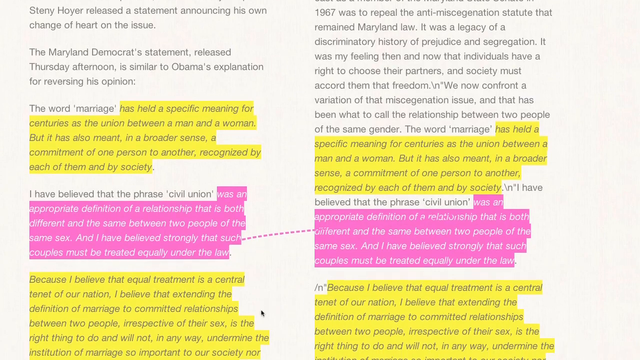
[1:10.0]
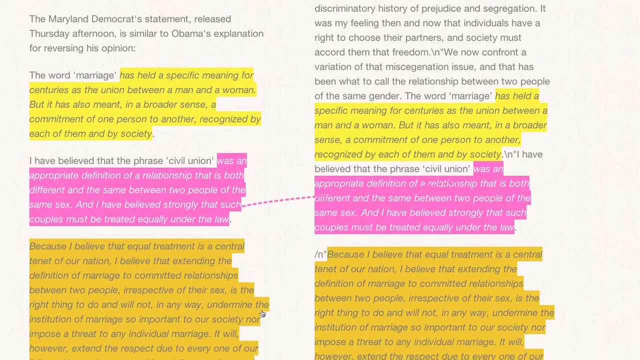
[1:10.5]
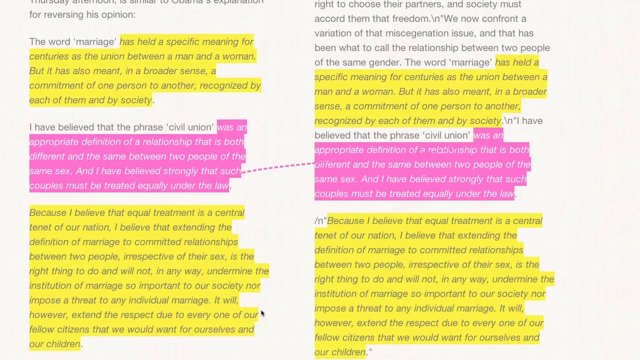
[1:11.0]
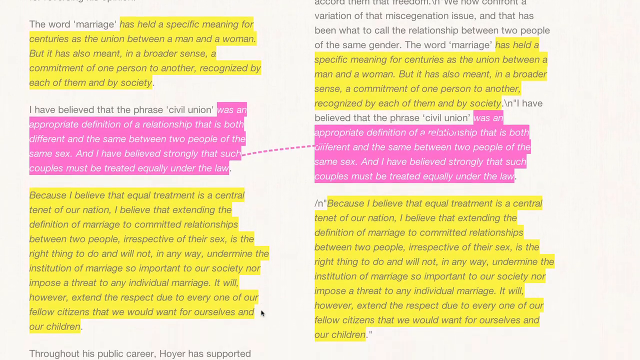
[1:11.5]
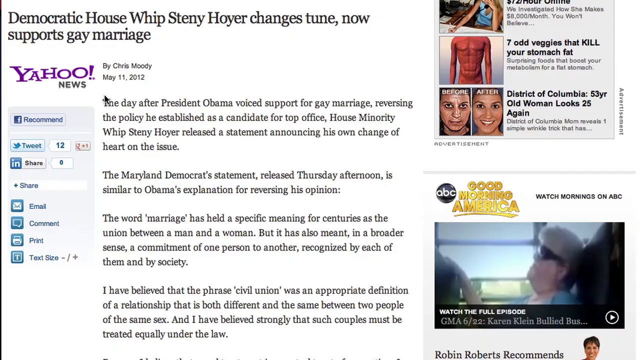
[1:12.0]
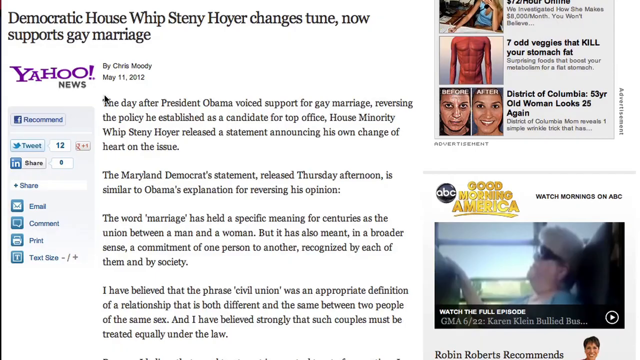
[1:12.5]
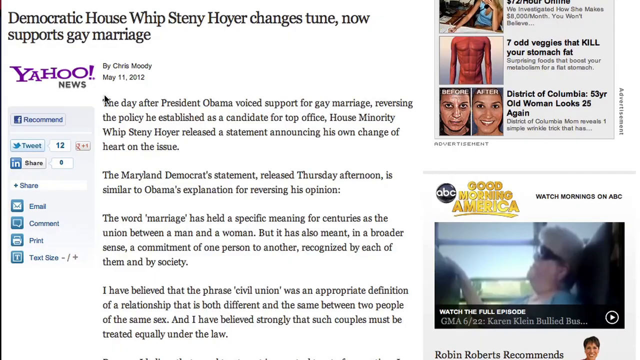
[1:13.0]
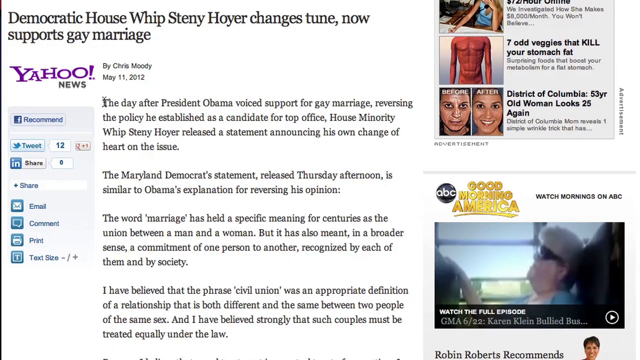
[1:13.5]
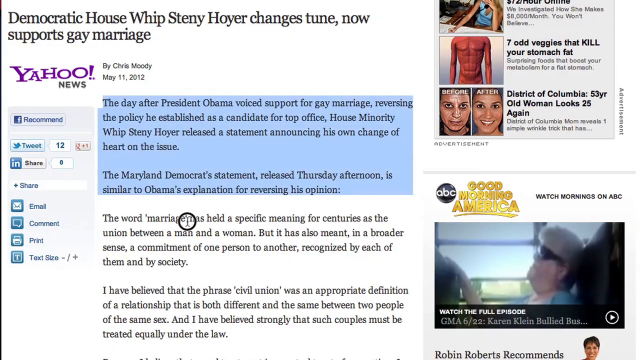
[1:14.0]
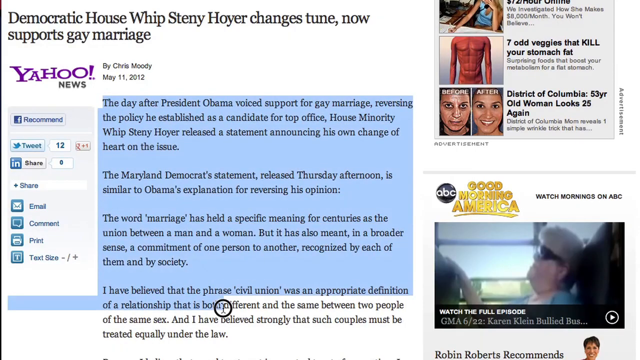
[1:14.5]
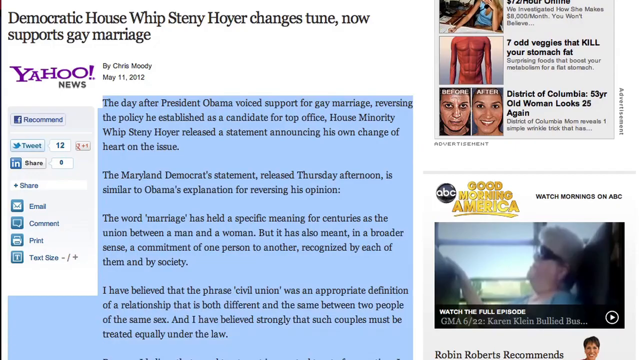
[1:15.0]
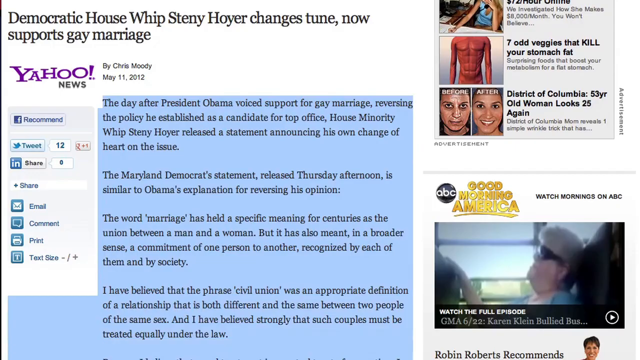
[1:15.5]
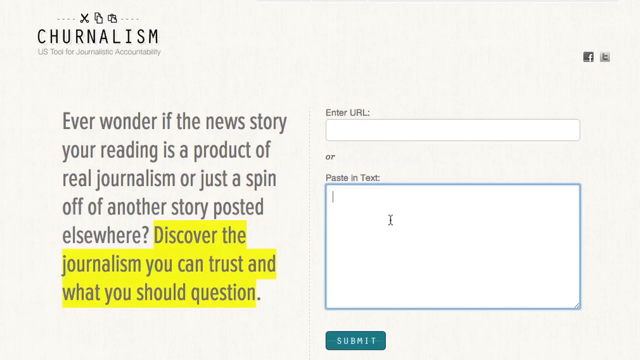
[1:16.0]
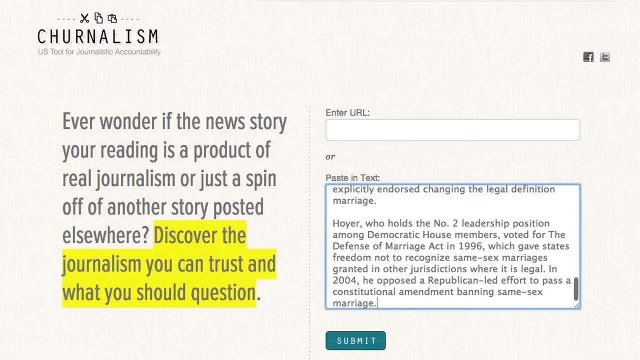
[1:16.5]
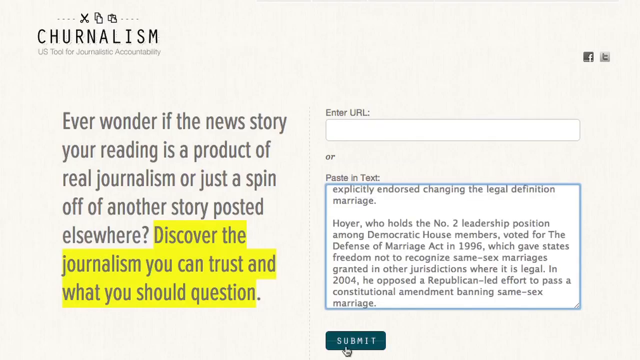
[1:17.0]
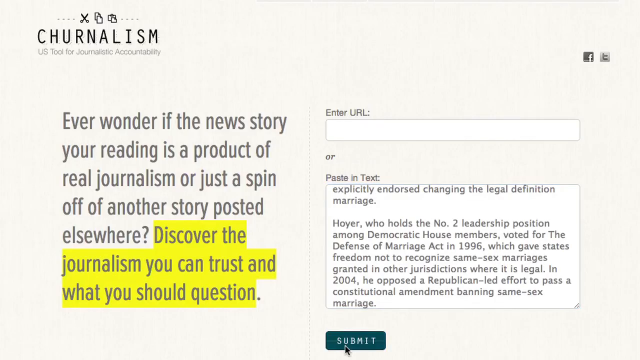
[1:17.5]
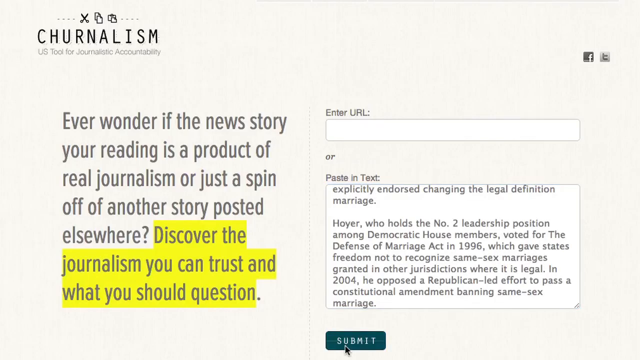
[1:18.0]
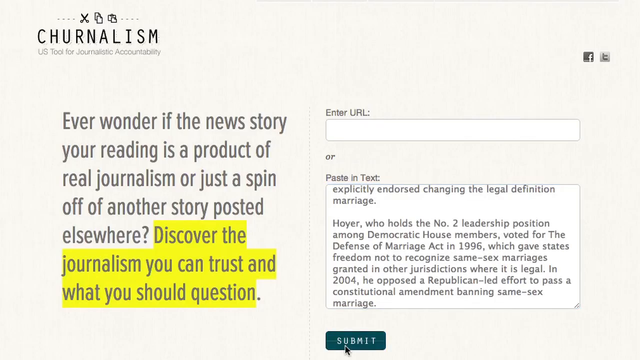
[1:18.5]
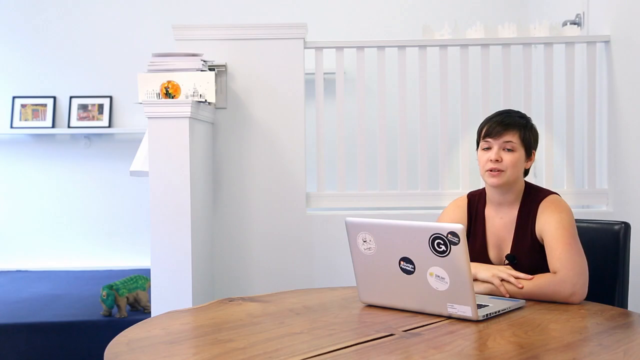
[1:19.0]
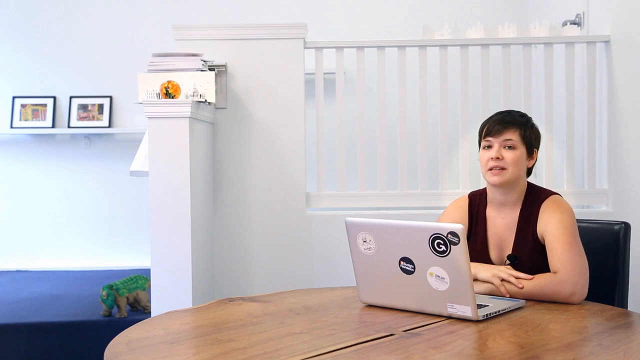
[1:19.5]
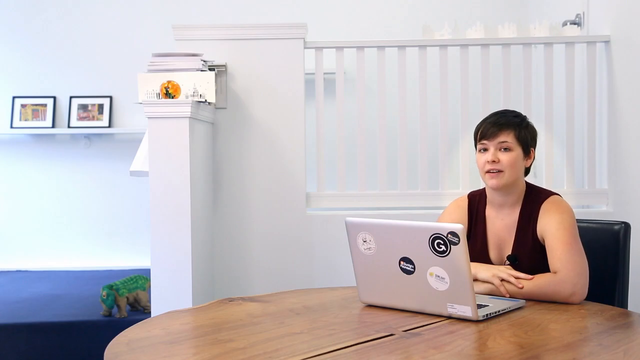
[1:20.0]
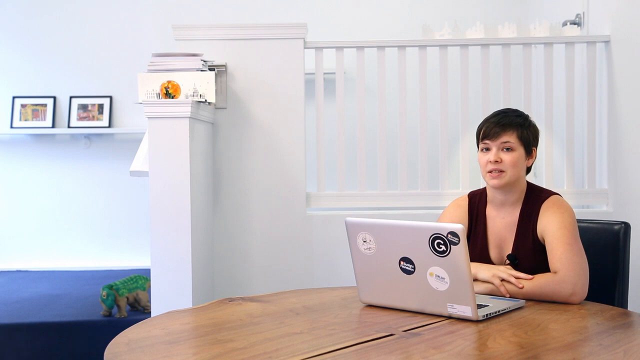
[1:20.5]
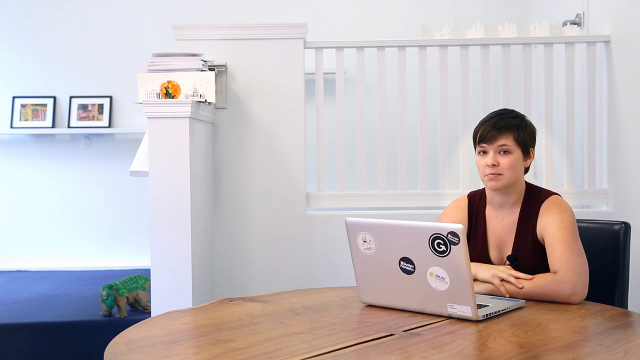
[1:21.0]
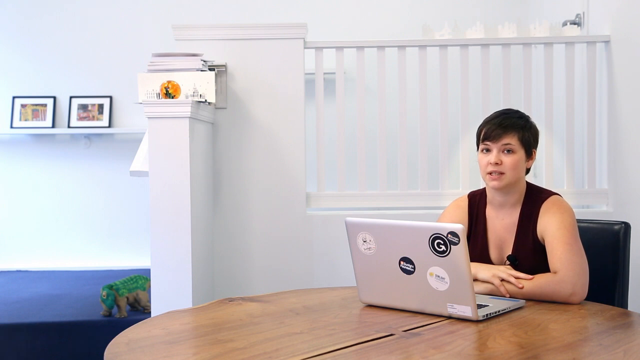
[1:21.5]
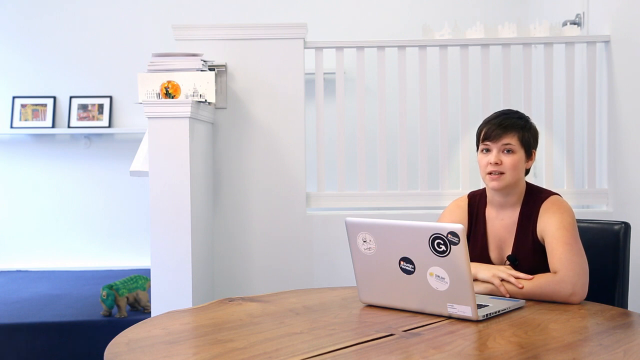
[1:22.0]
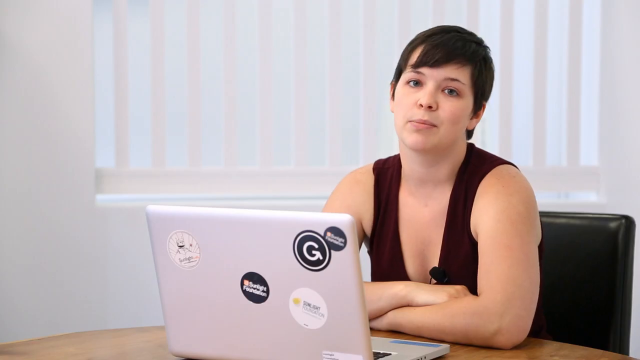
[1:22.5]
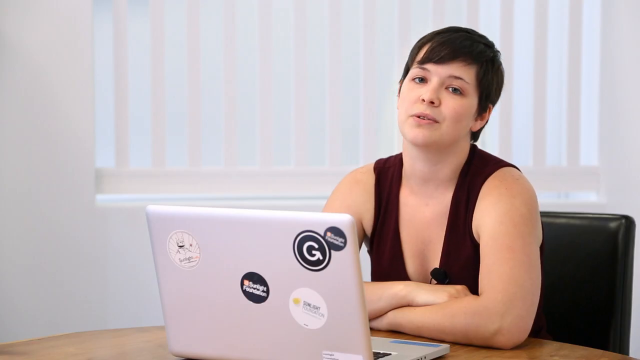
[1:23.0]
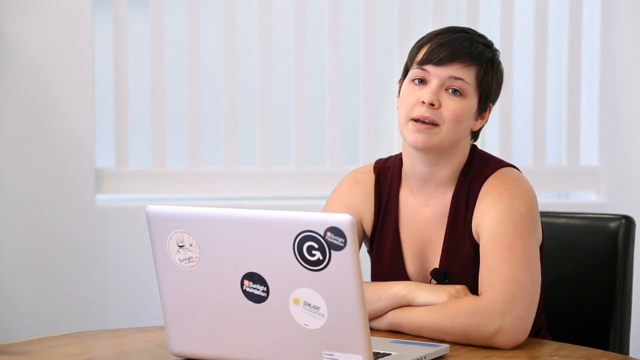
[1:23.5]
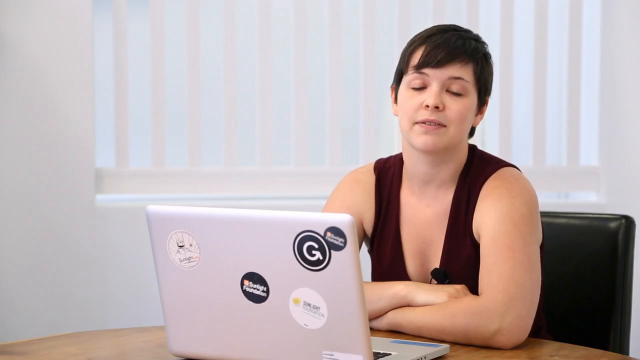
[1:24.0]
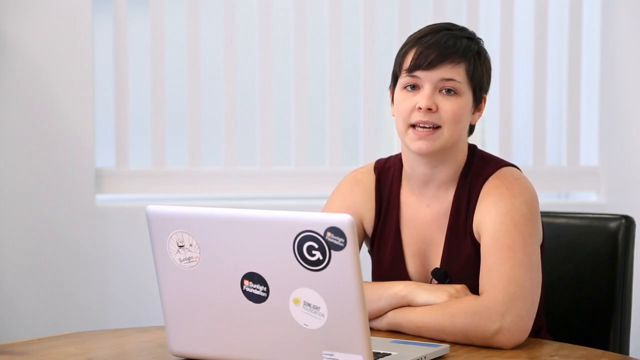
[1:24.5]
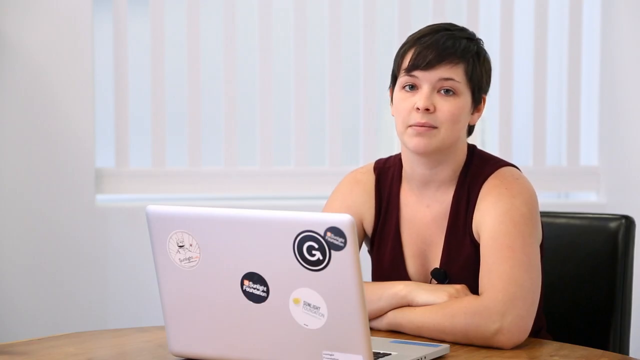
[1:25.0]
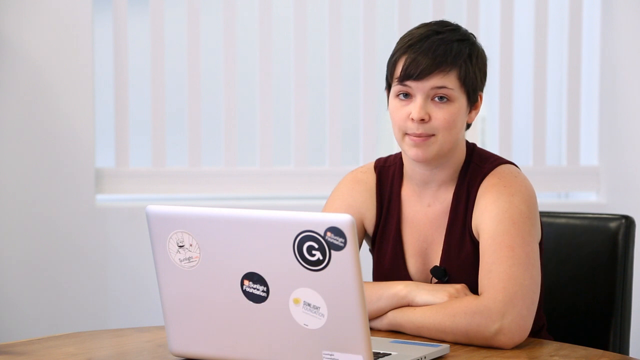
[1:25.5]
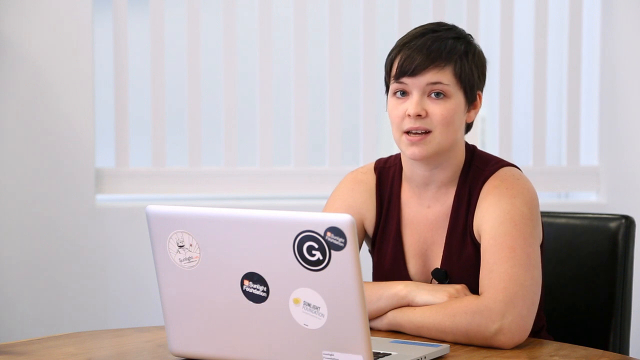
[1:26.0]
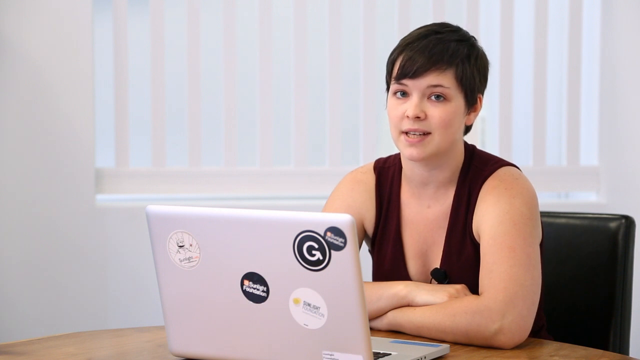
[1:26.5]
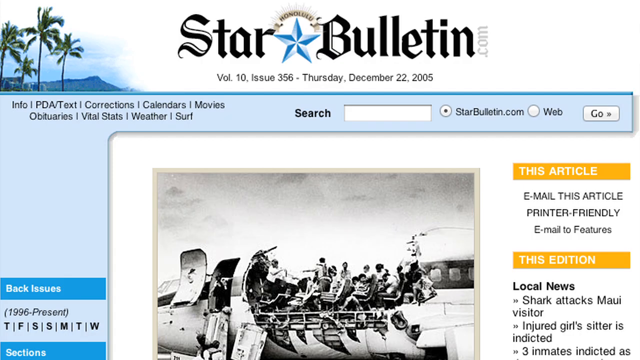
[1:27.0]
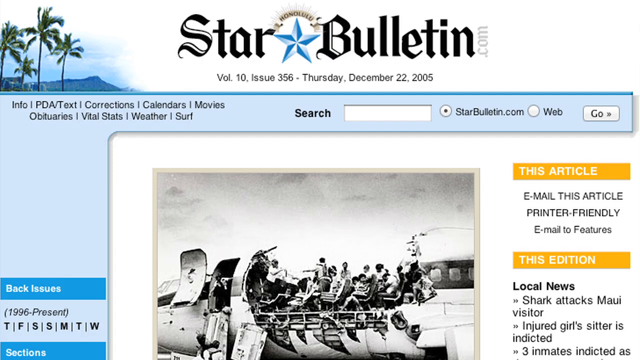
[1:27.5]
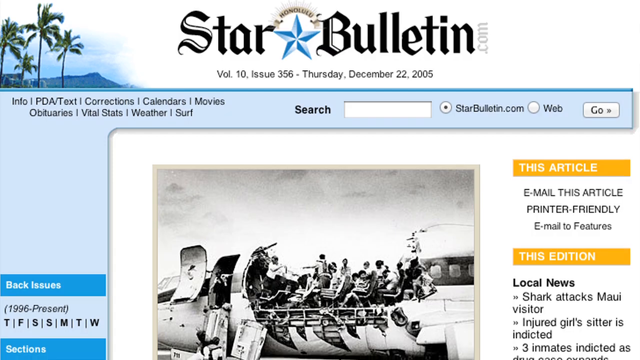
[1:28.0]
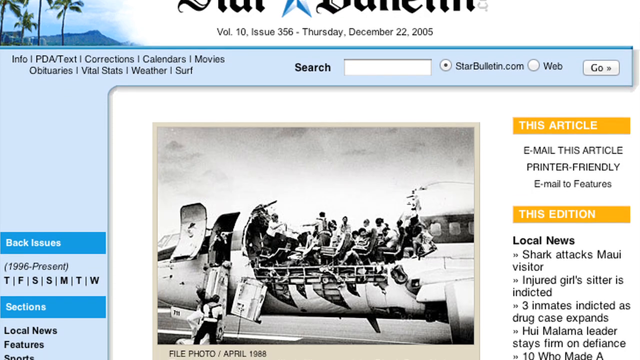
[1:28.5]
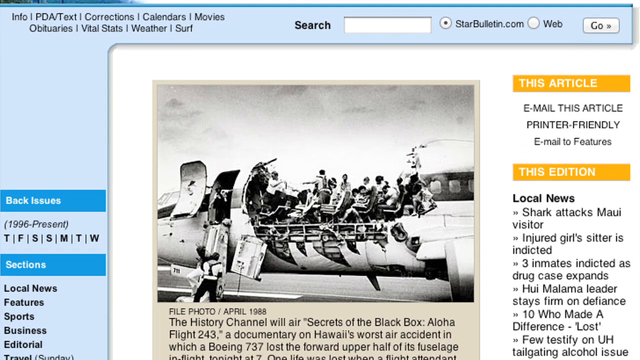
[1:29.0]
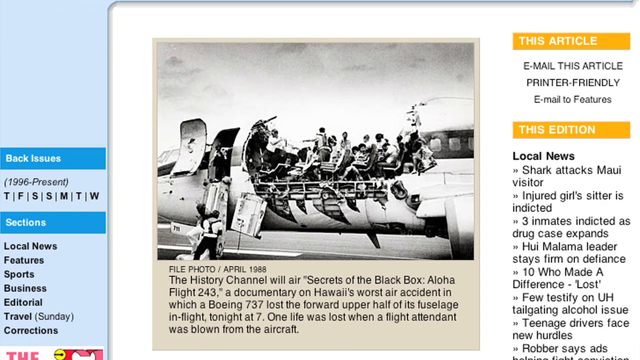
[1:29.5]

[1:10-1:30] A document page of information about gay marriage has two columns, one on the left and one on the right, possibly containing the same information. Parts of the document are highlighted in pink and in yellow. One area highlighted in yellow says the word "marriage" and "has held a specific meaning for centuries as the union between a man and a woman, but it has also meant, in a broader sense, a commitment of one person to another, recognized by each of them and by society." The pink highlight says "was an appropriate definition of a relationship that is both different and the same between two people of the same sex," and the text continues. The view then goes to a Yahoo News page where some information is highlighted, and then to another page where that information is copied and pasted. The lady is shown sitting at the table and speaking, and then the view pans over to the Star Bulletin homepage.